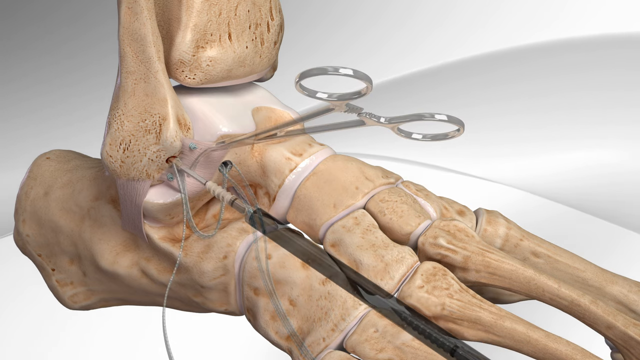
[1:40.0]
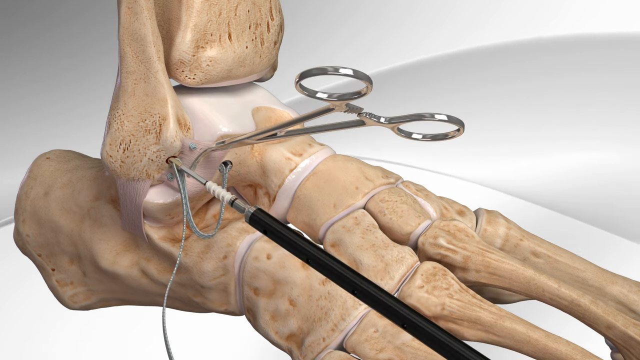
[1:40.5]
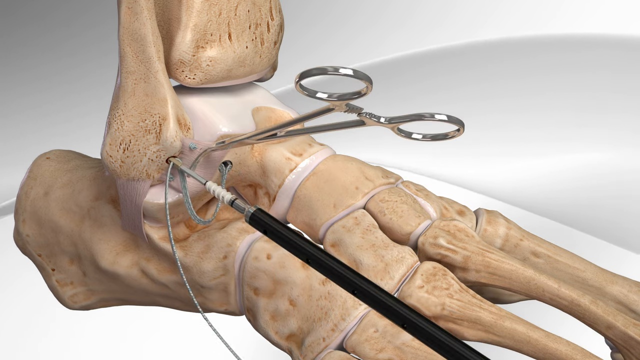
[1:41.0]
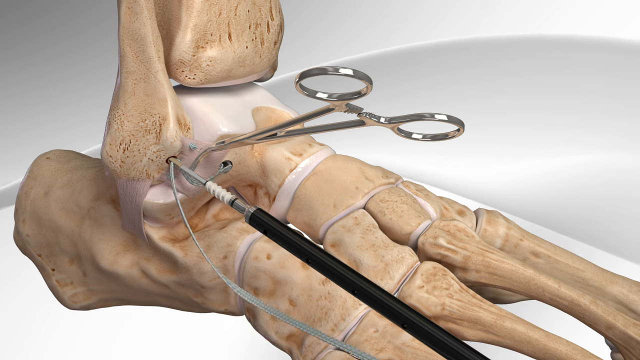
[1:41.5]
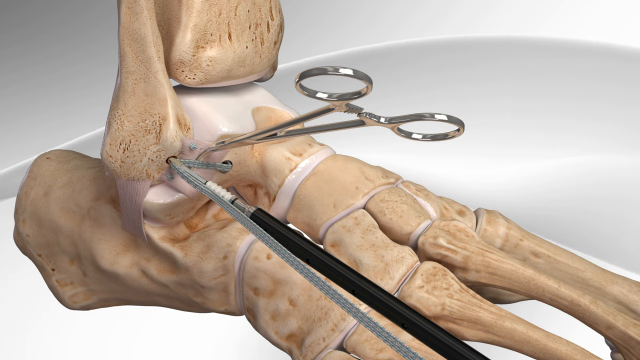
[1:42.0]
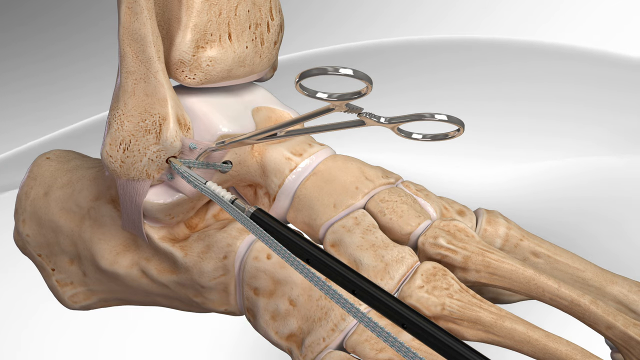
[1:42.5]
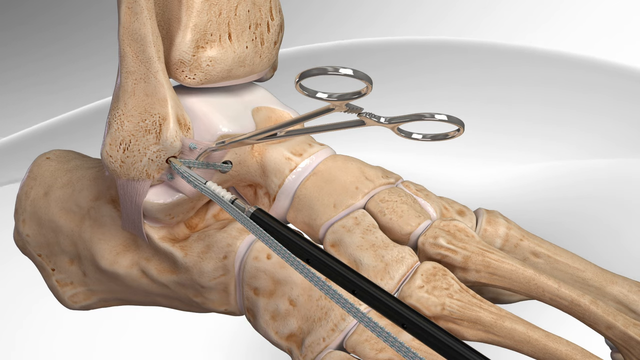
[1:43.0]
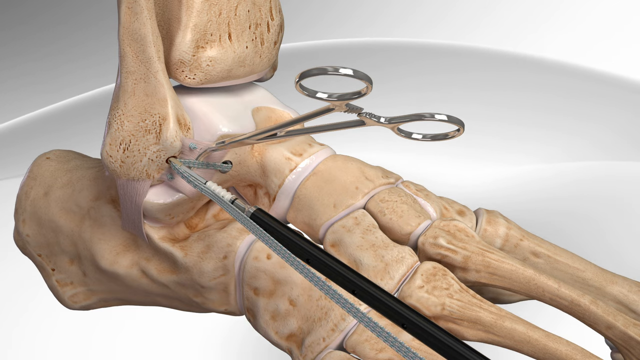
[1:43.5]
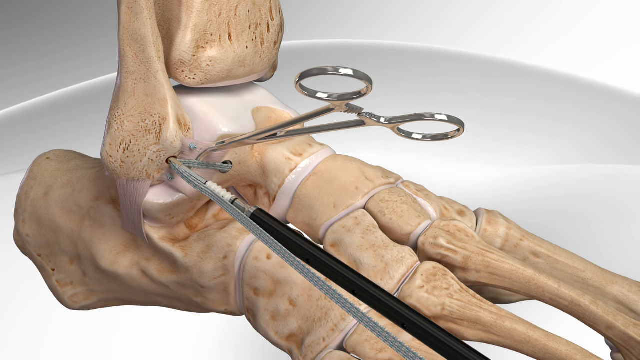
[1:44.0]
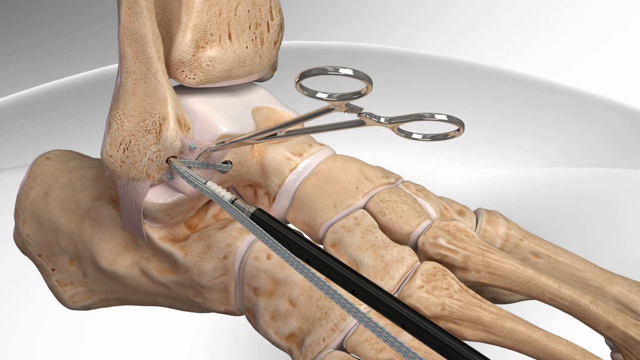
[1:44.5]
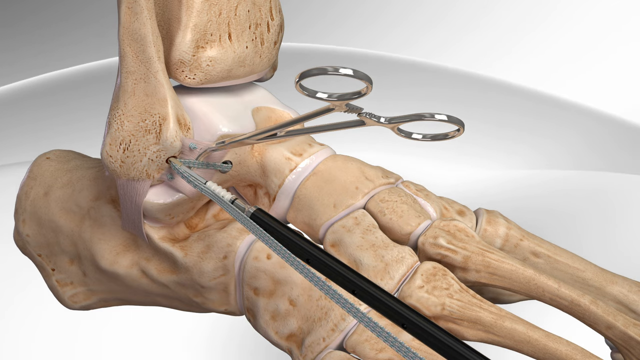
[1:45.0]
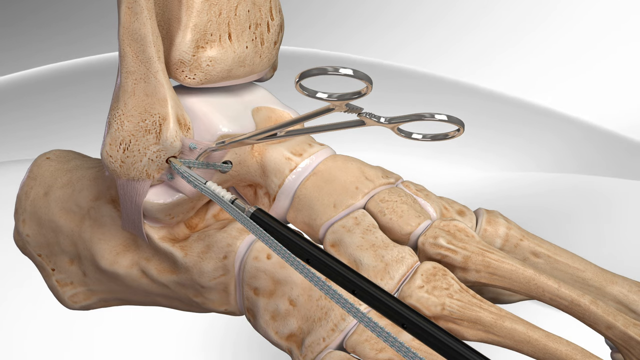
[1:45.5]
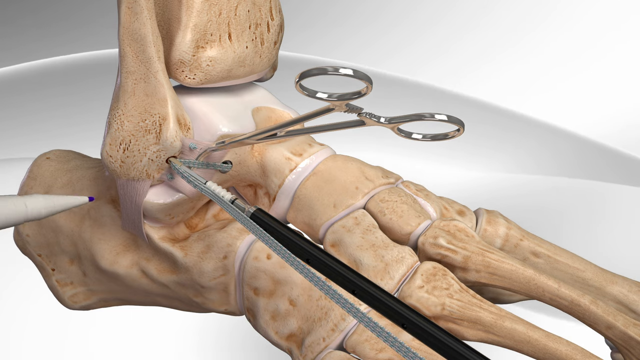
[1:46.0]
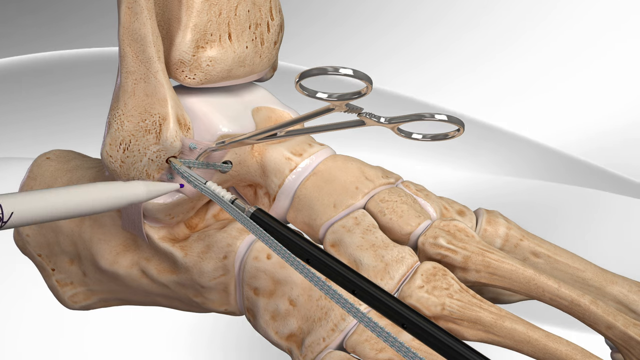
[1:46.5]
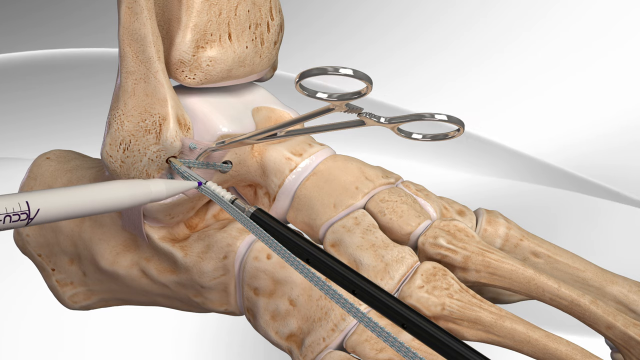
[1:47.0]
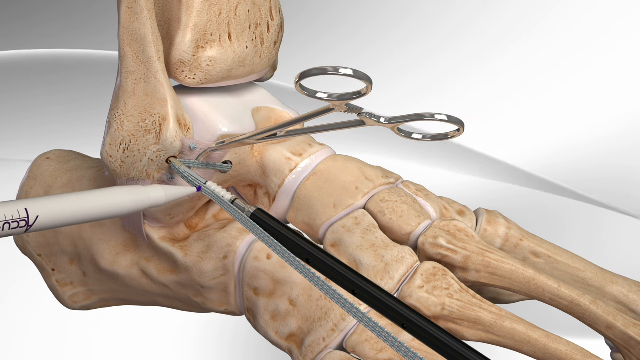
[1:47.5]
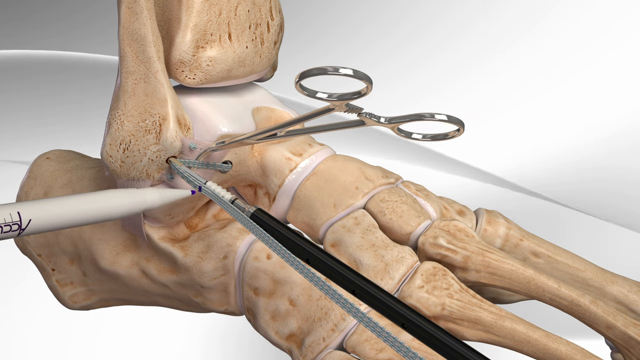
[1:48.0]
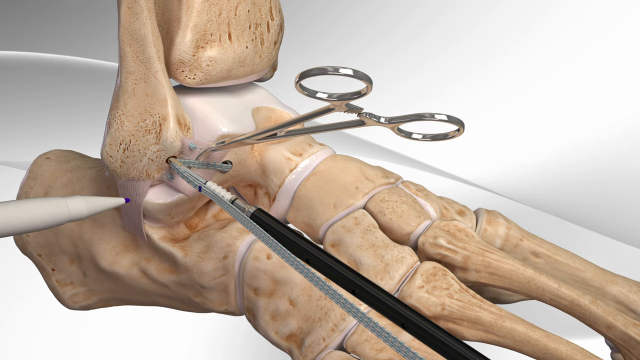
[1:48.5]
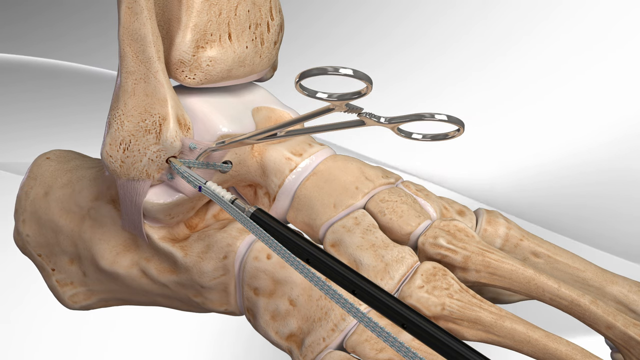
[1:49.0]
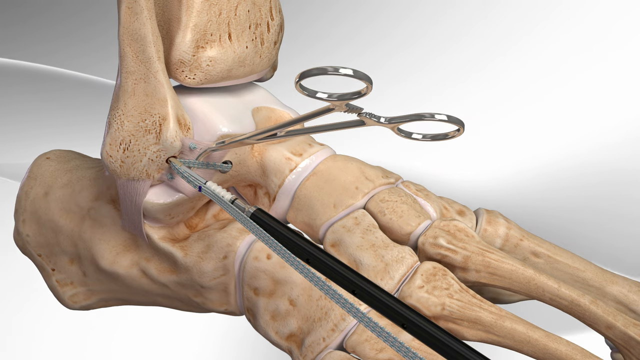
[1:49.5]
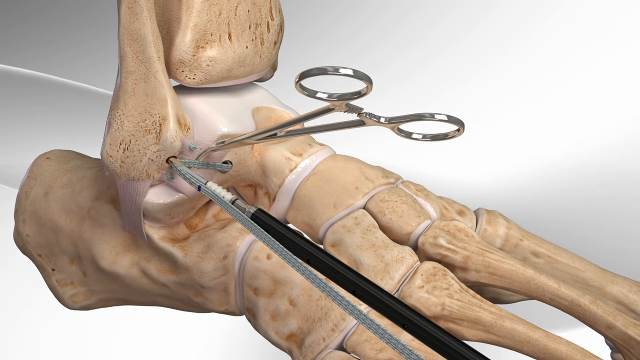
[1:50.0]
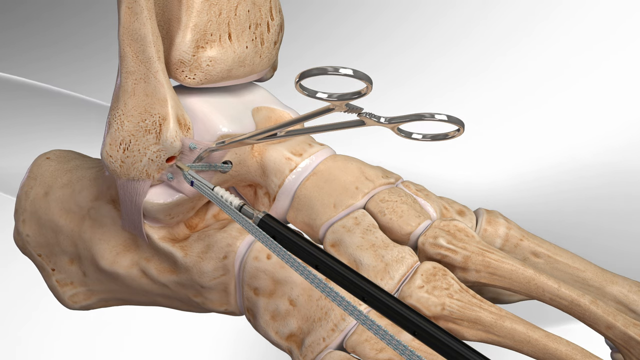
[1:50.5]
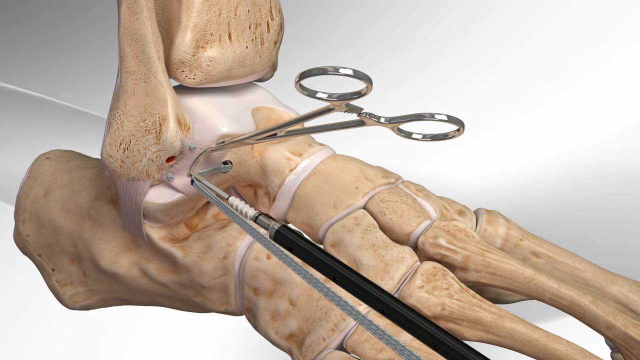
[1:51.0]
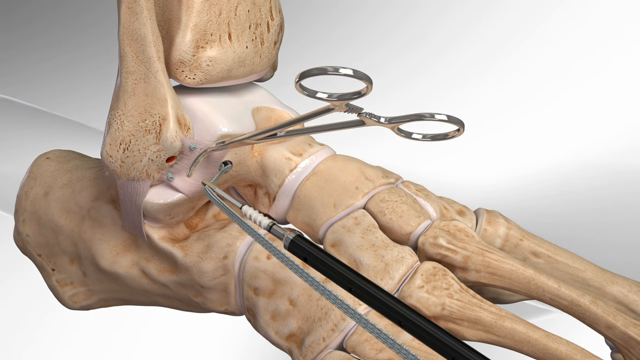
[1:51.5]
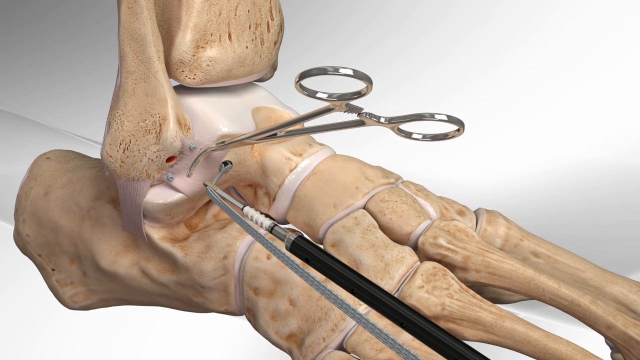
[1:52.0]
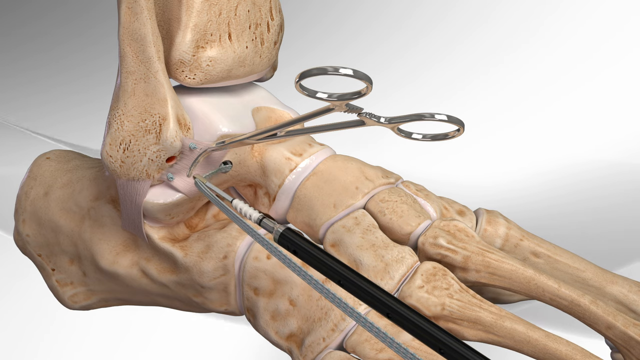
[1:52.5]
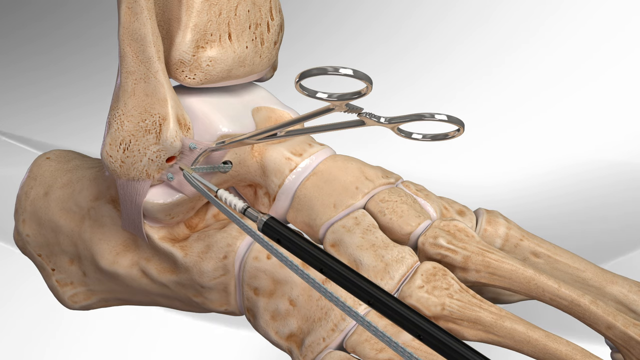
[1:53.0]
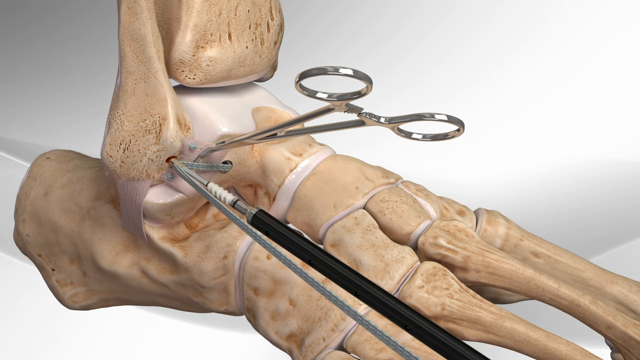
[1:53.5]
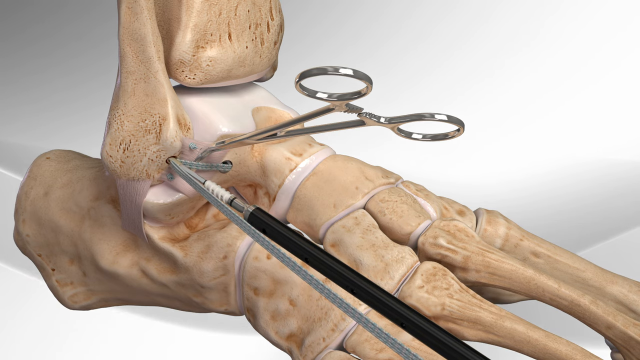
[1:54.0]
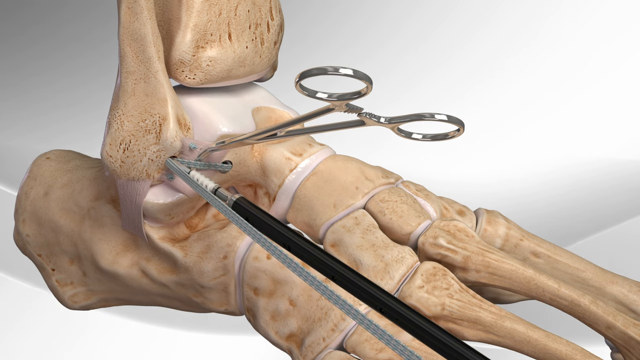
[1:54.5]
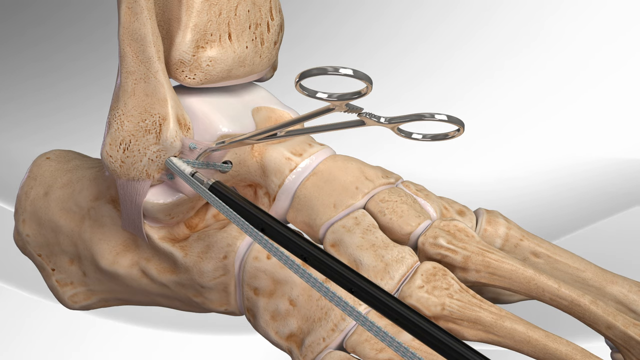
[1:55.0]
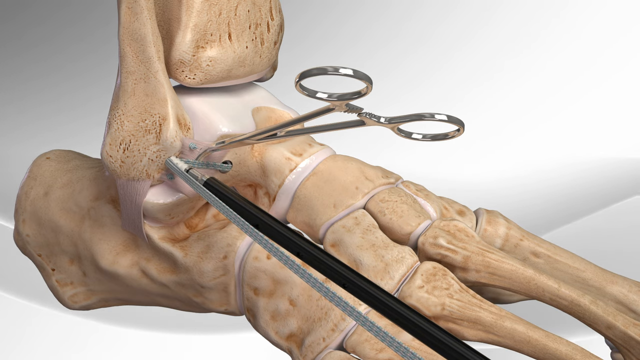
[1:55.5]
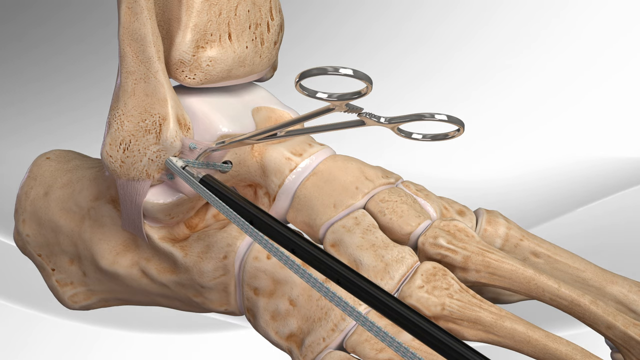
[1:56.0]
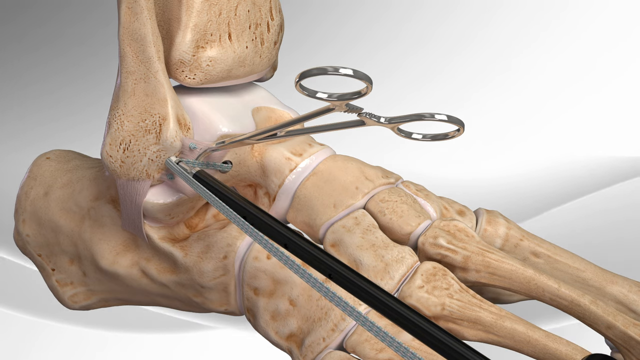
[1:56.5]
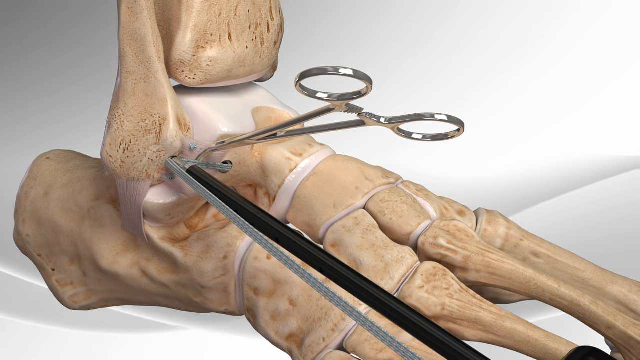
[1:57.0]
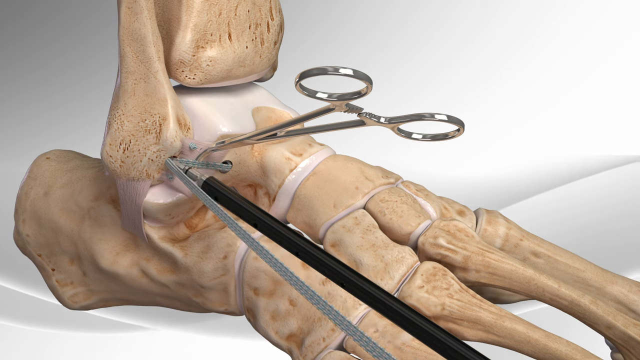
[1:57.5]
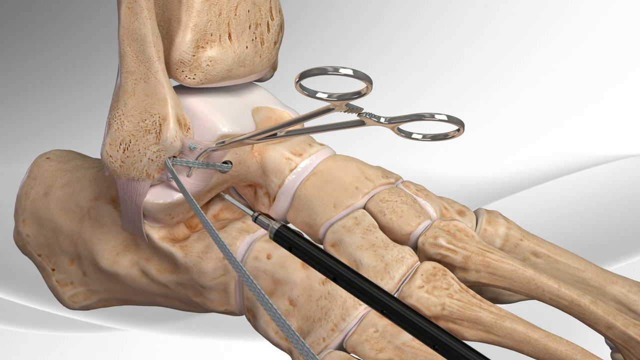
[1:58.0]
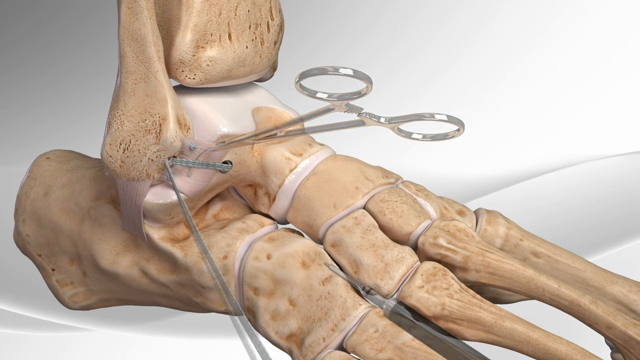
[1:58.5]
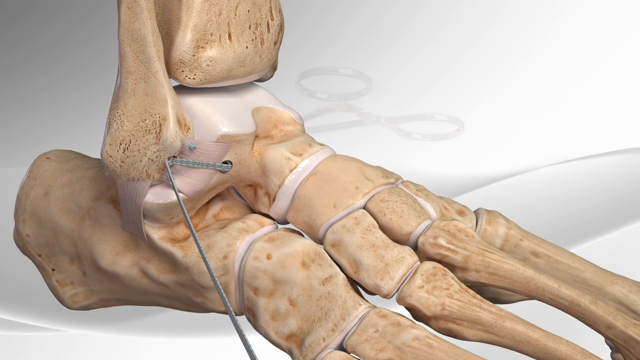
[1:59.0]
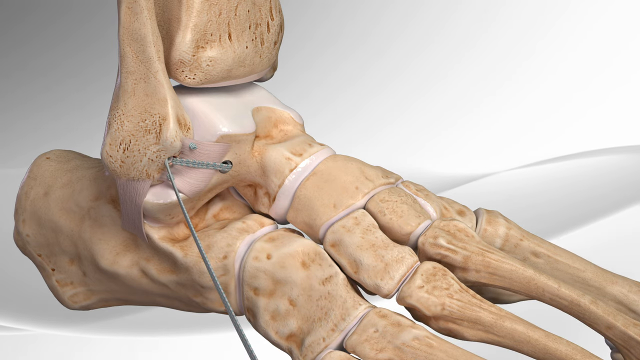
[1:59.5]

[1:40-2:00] The first hole, the second hole with the pin, and the third hole with the thick wires coming out of it are visible. Hemostats are holding something that is apparently part of the ligament, possibly part of the wire. The thick wires run from the third hole up toward the first hole, where a screwdriver-looking instrument with a black handle holds the end of the wire; the instrument goes into the hole, but the wire does not. The wire is pulled tight, so it can be seen pulling from the third hole. Something like a pen or marker comes in and marks the wire. The instrument then pulls back to the marked part and pushes all the way into the hole between the first two holes, pushing the wire into it.